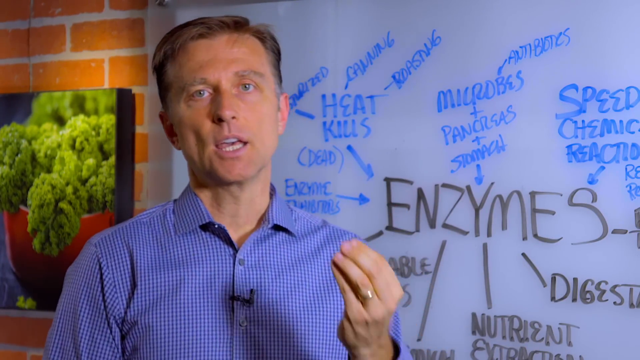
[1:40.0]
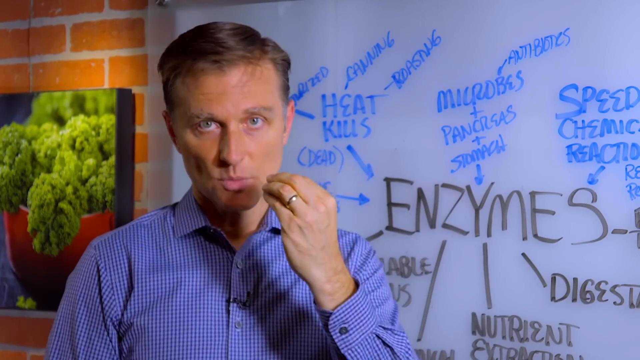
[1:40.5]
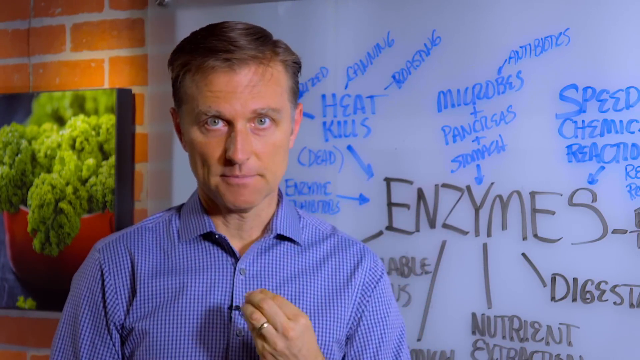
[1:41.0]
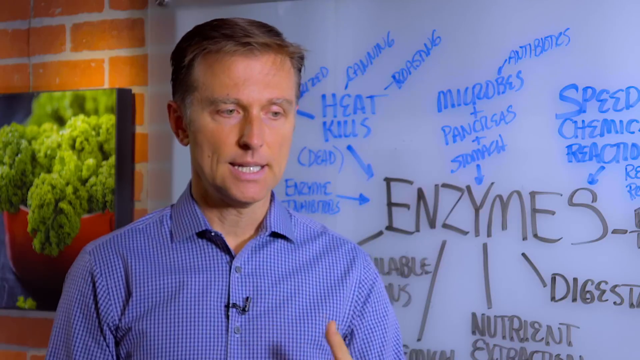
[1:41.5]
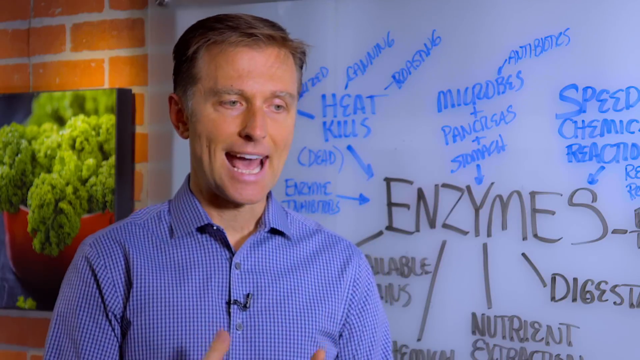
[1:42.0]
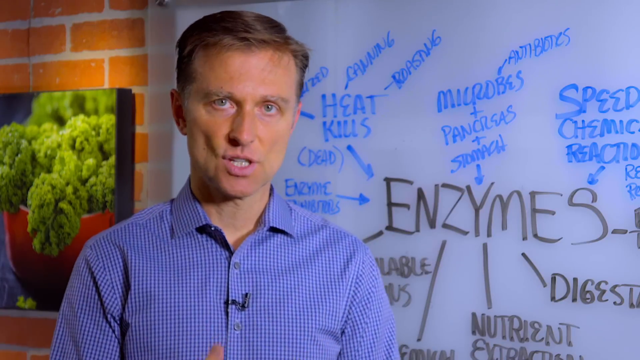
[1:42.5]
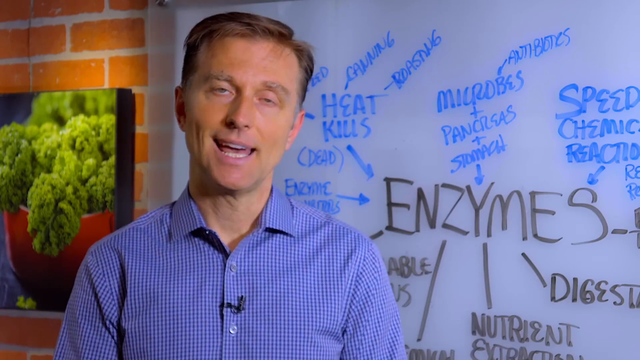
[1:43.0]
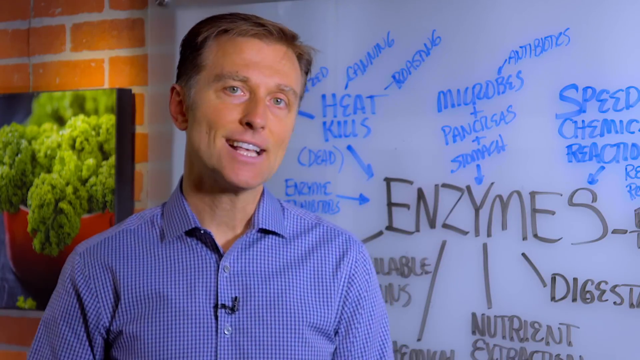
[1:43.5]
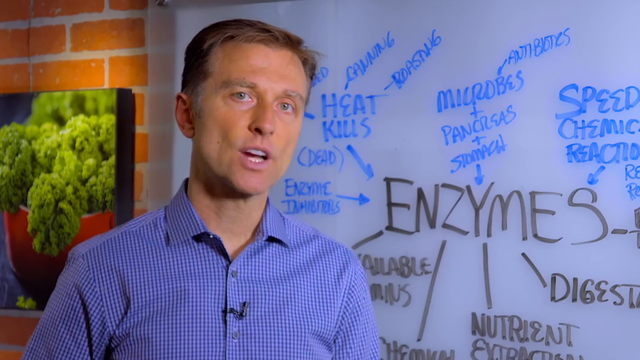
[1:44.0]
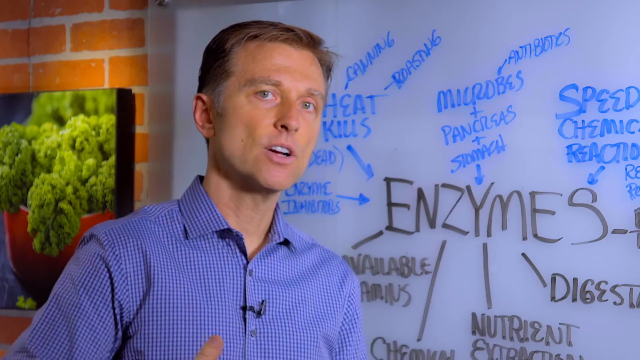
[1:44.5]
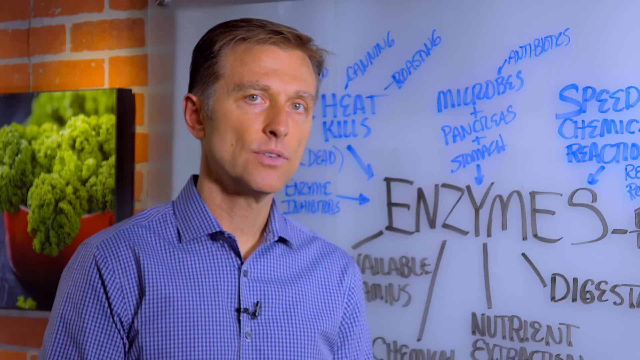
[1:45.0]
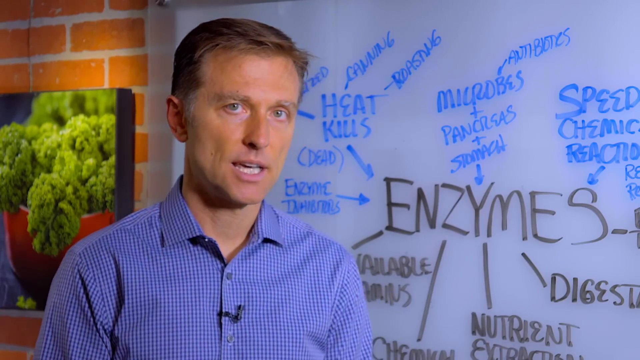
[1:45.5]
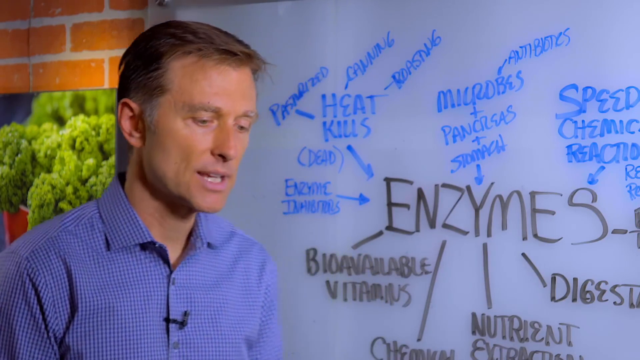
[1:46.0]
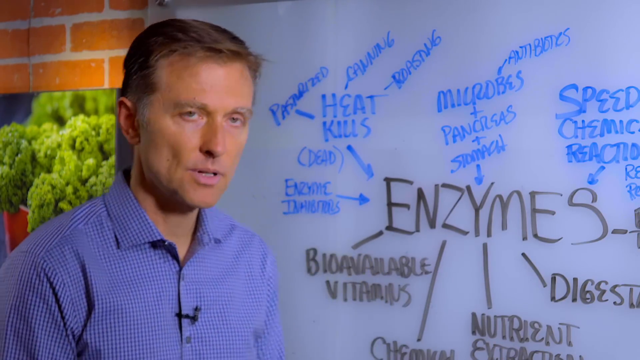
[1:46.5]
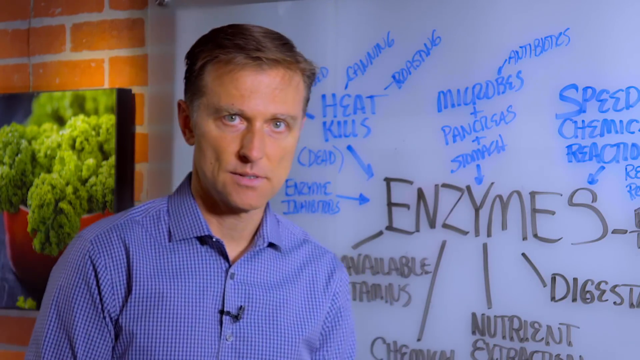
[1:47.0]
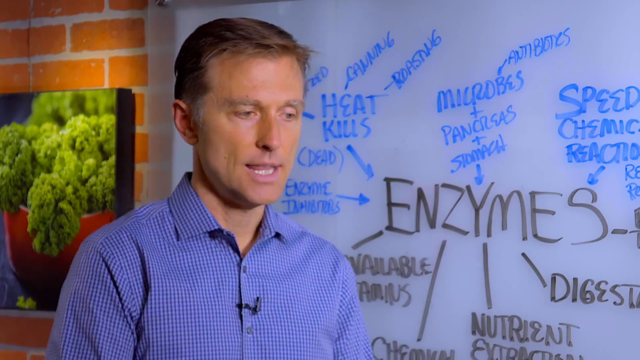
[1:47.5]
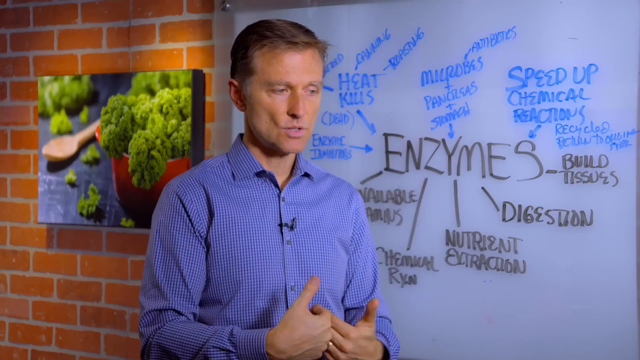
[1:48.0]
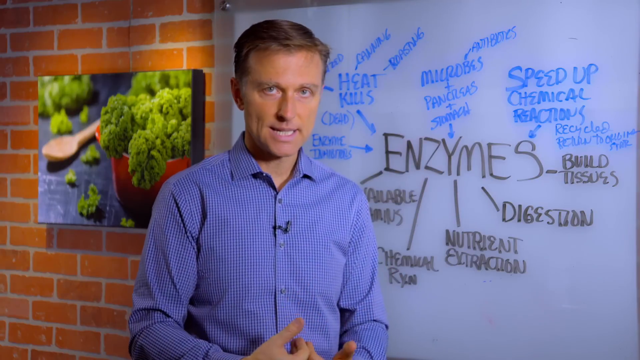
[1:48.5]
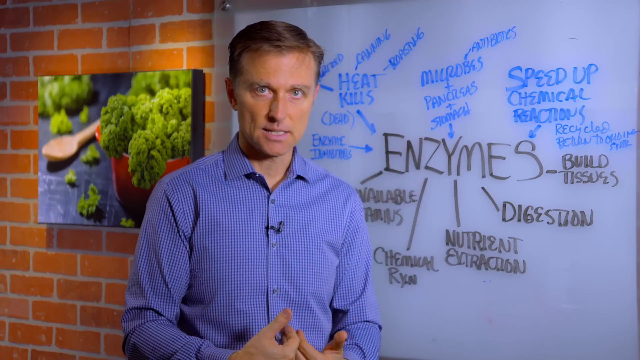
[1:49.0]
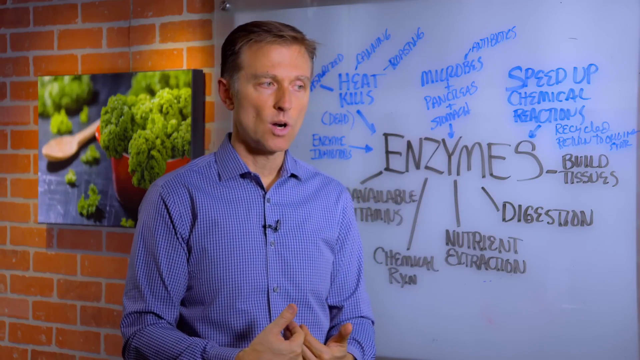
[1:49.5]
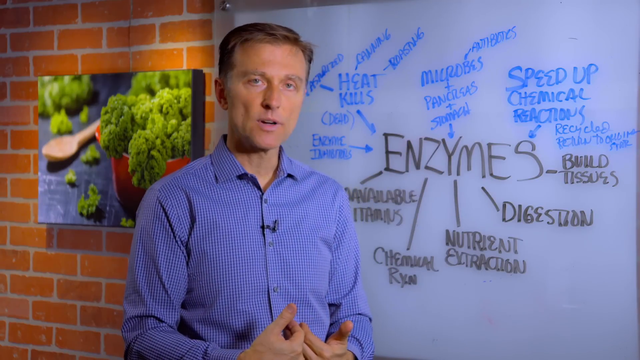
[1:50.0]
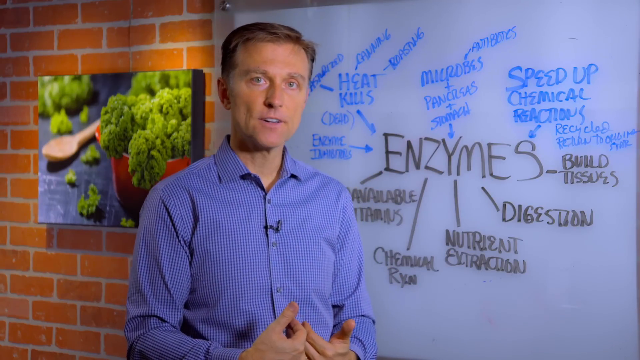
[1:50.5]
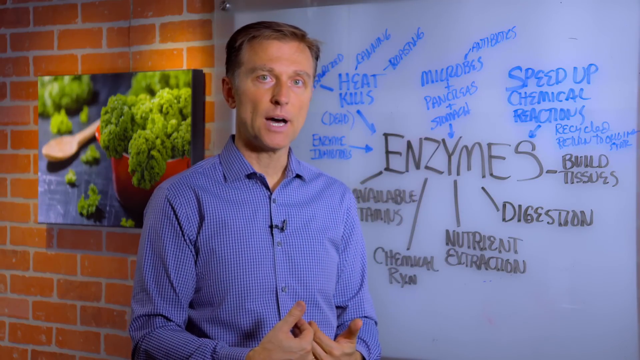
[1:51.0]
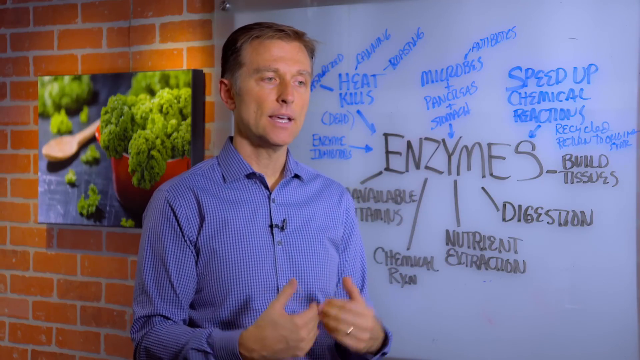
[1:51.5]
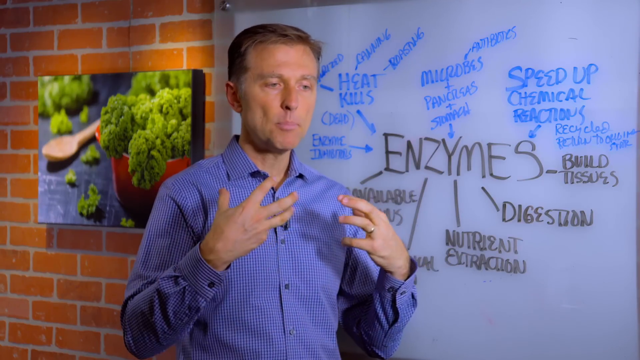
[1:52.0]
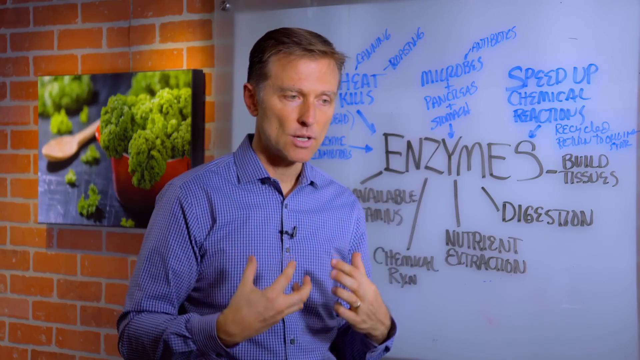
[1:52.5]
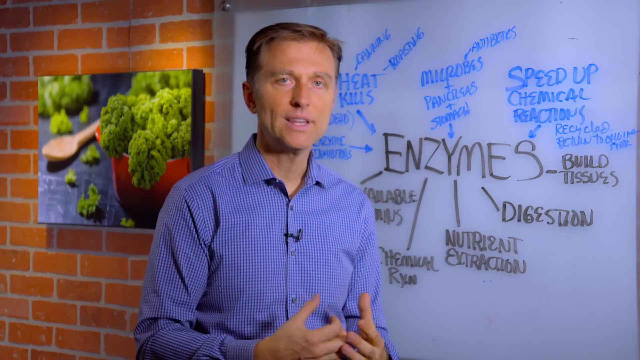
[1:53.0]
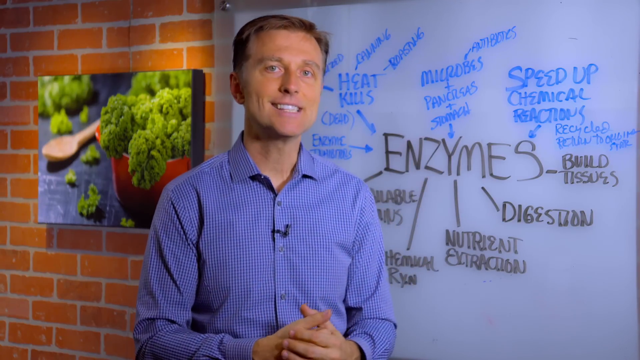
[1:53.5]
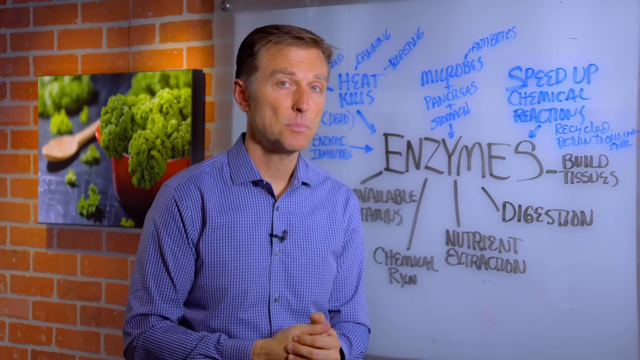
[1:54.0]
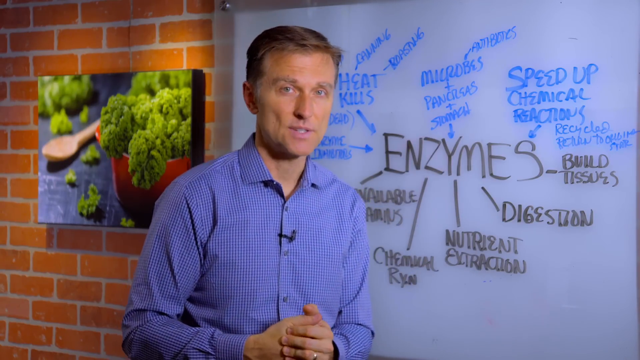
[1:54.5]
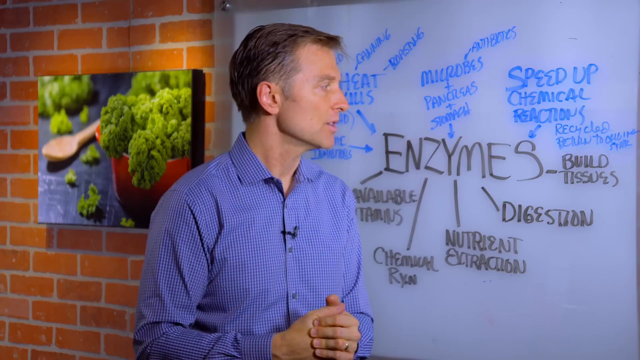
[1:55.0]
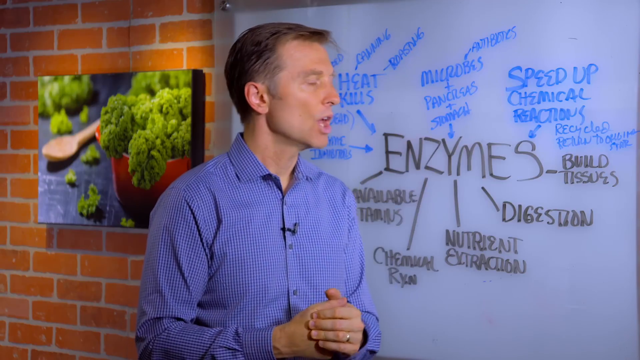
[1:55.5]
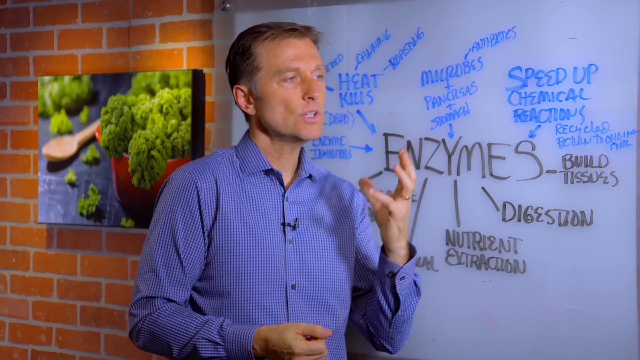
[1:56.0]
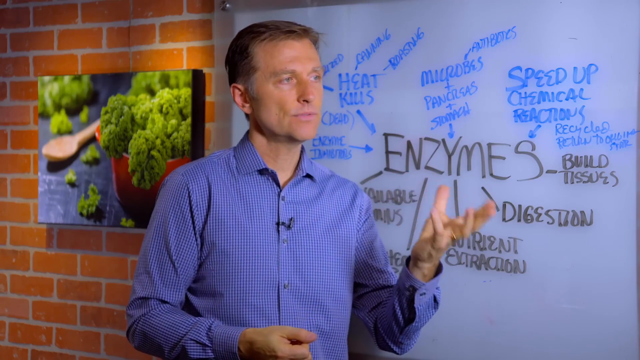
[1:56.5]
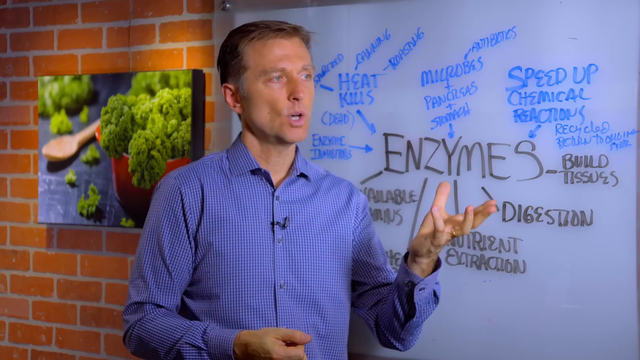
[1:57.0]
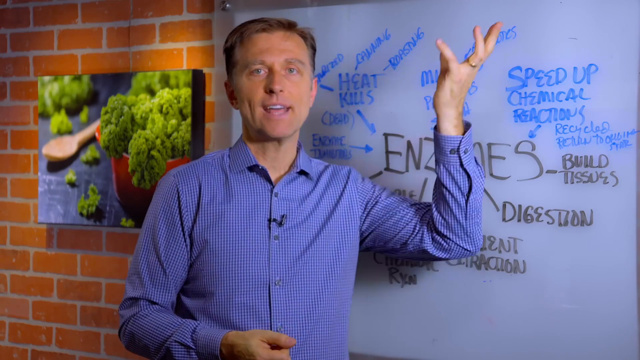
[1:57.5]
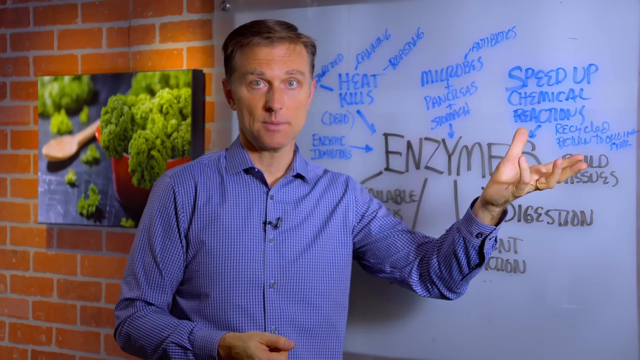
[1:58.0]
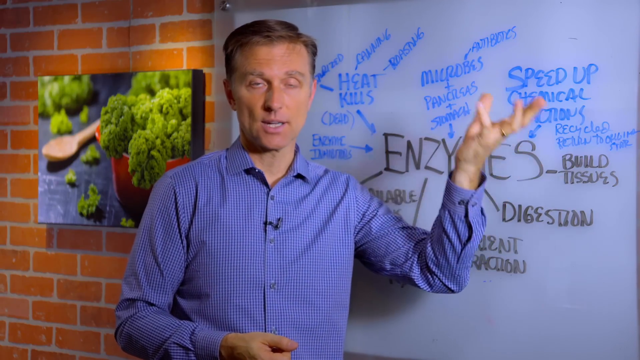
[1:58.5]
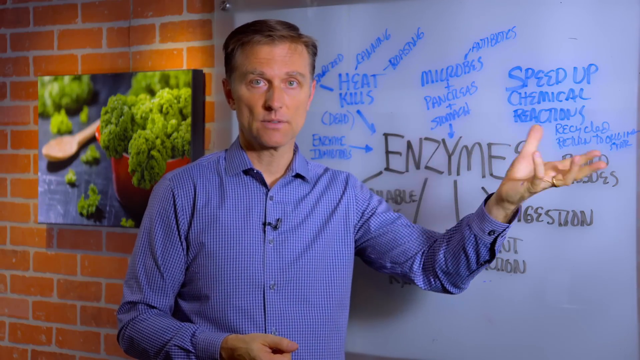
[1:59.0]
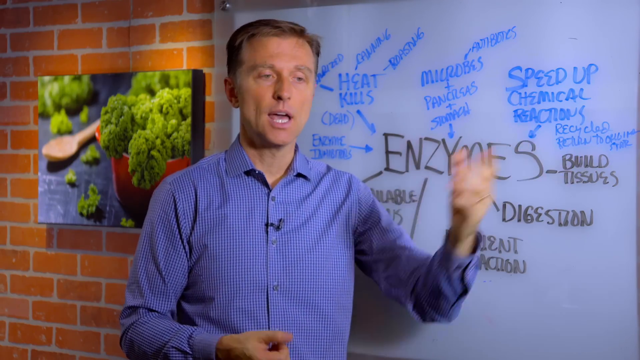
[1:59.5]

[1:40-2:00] The man looks at the floor and then at the camera. He seems to talk with his mouth very open, possibly emphasizing or shouting something, and seems serious. He holds his hands close to his stomach while talking, then kind of lifts them and lets them fall. He then waves his hand in a motion that seems to point to one element and then to another. He seems to get excited as he talks.